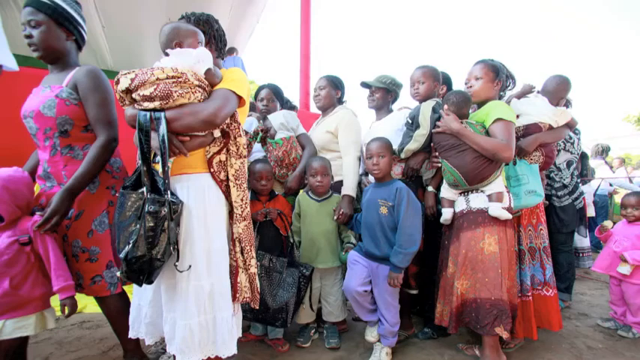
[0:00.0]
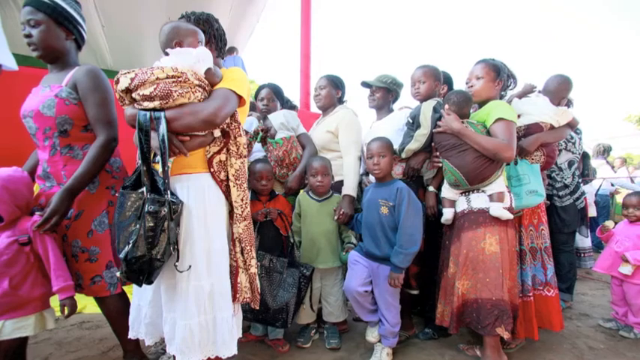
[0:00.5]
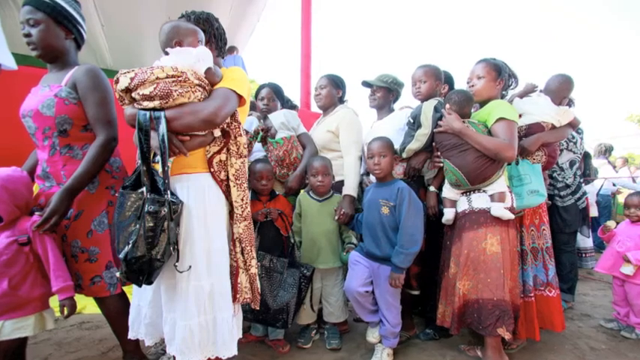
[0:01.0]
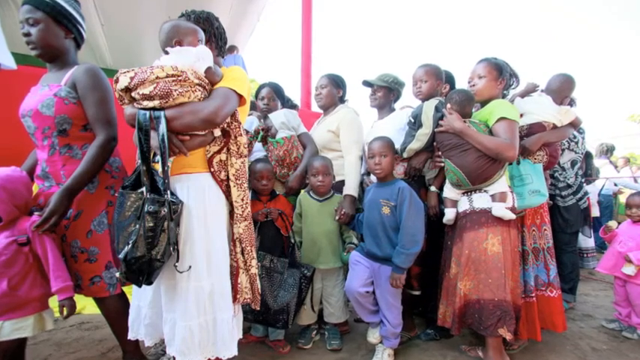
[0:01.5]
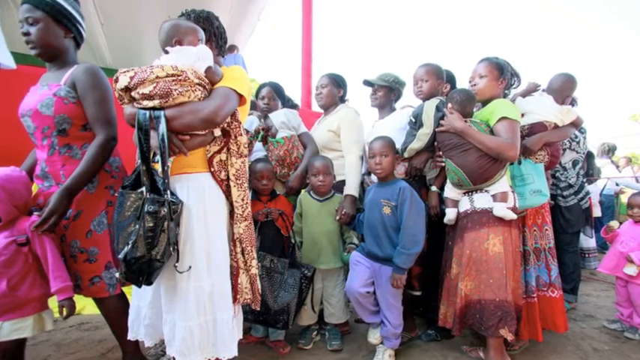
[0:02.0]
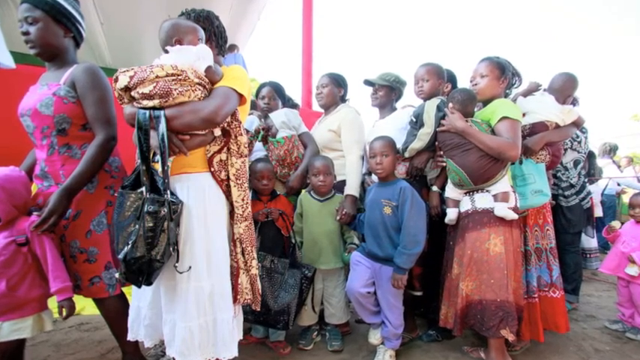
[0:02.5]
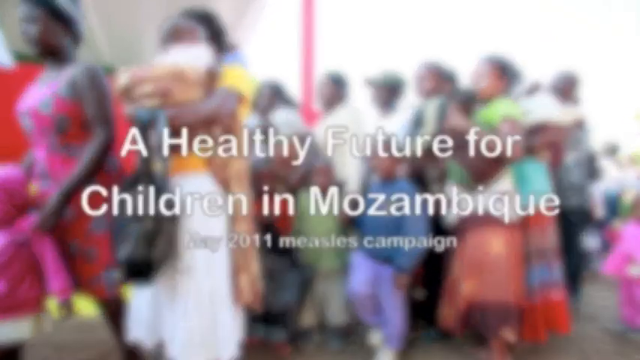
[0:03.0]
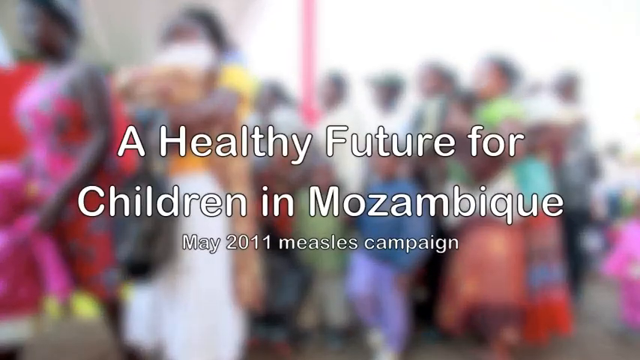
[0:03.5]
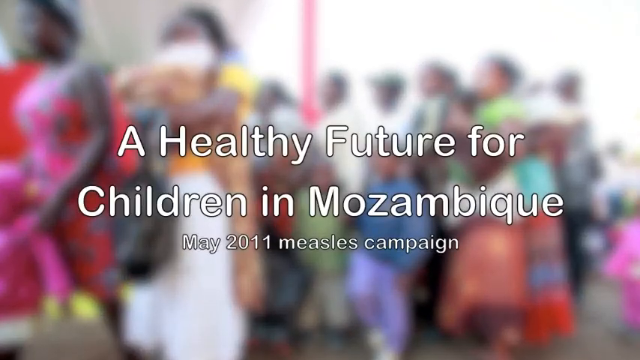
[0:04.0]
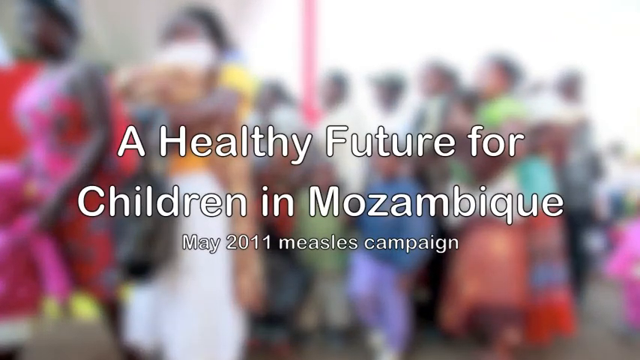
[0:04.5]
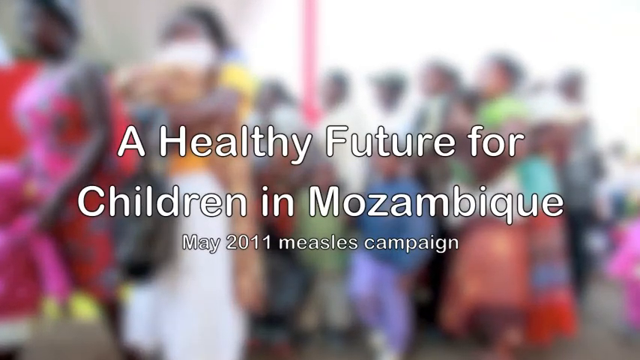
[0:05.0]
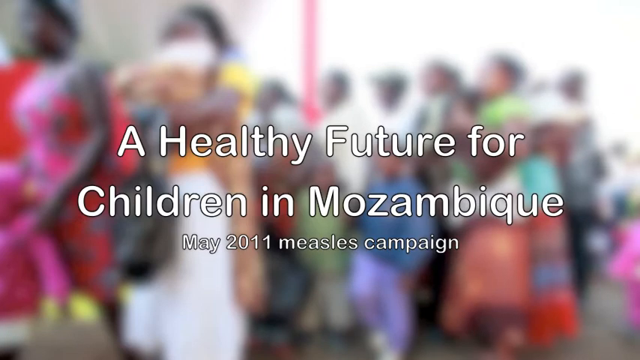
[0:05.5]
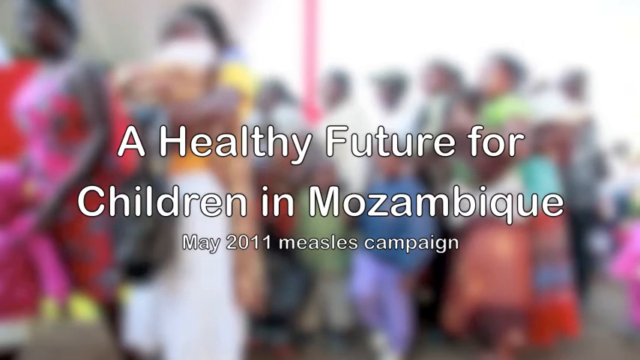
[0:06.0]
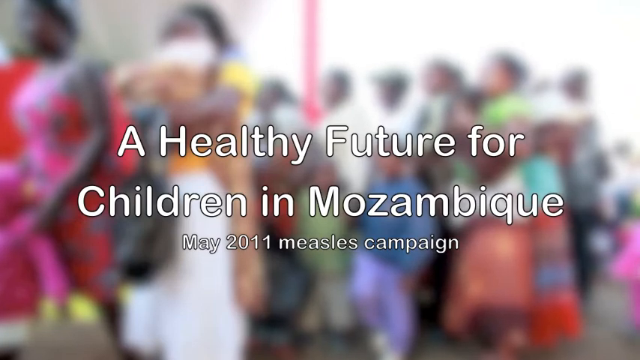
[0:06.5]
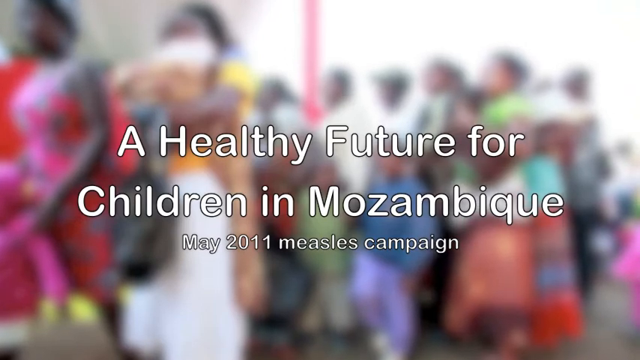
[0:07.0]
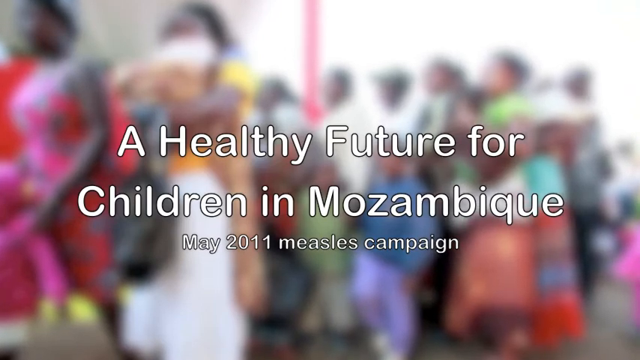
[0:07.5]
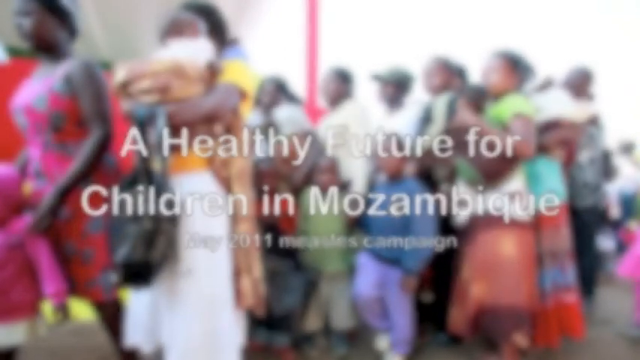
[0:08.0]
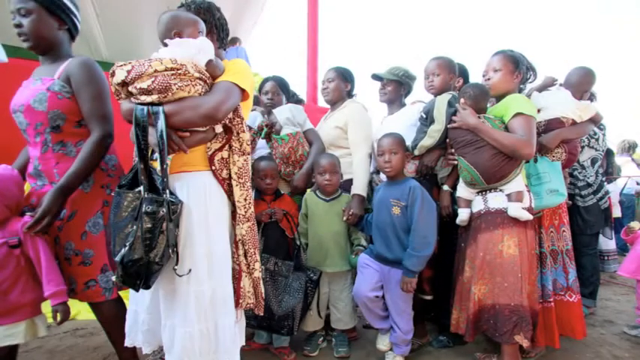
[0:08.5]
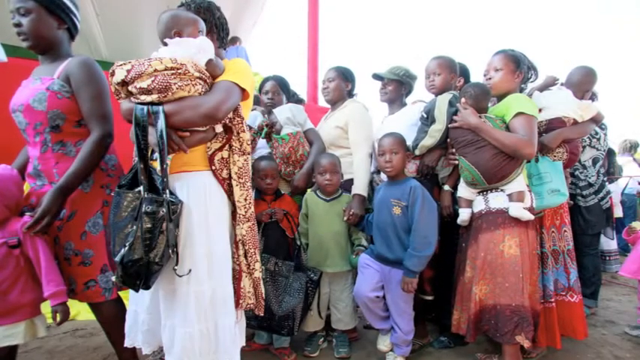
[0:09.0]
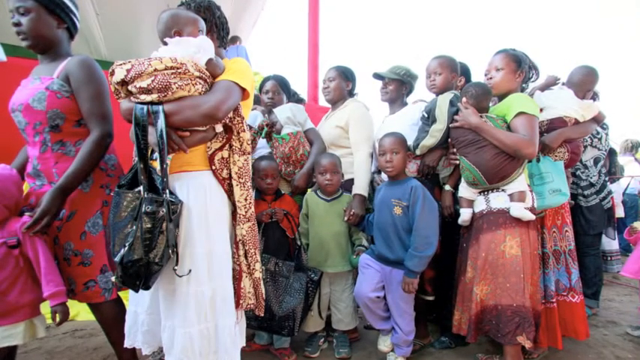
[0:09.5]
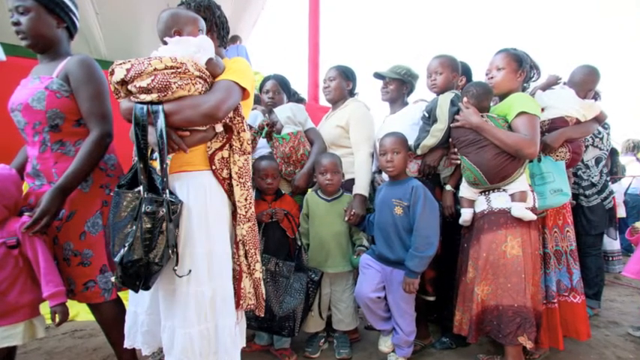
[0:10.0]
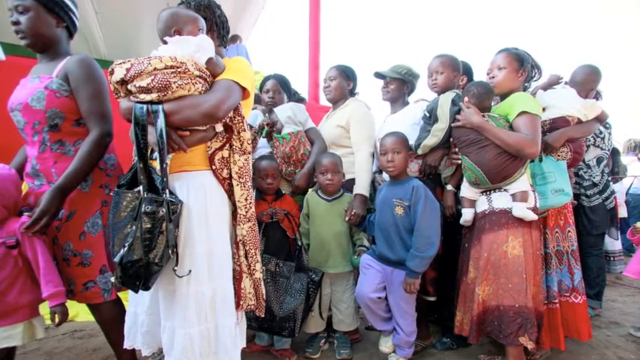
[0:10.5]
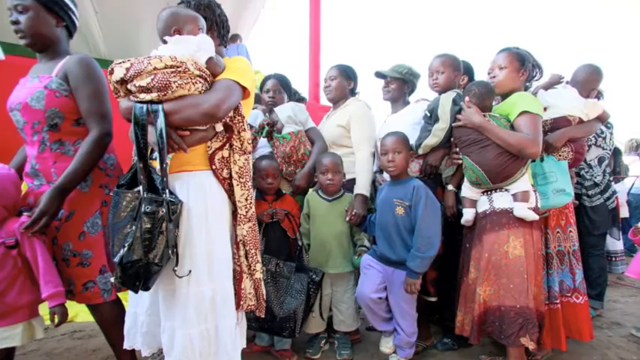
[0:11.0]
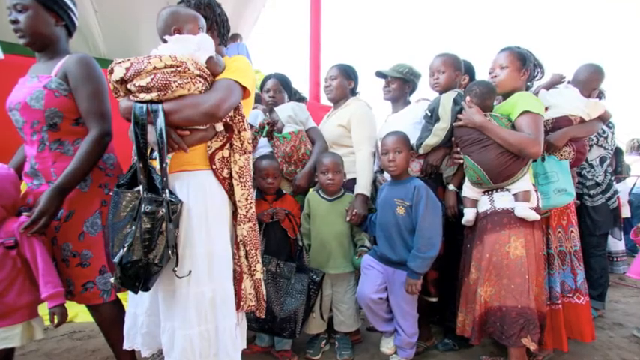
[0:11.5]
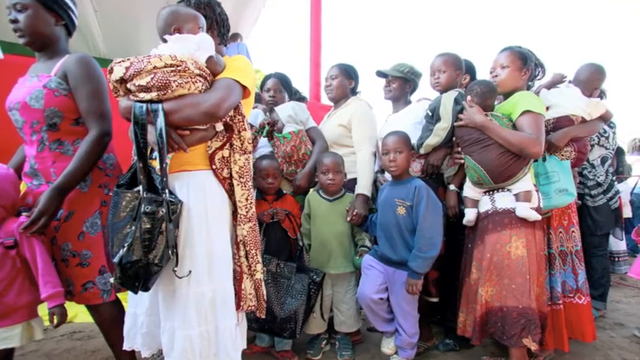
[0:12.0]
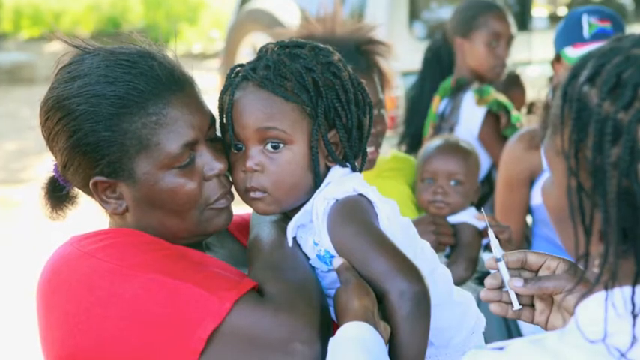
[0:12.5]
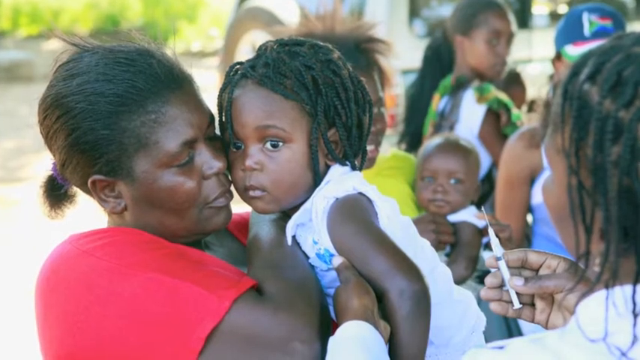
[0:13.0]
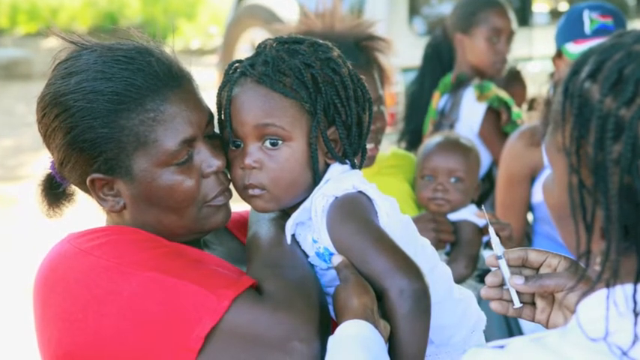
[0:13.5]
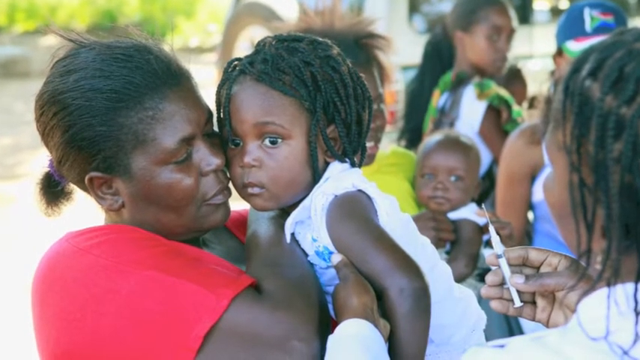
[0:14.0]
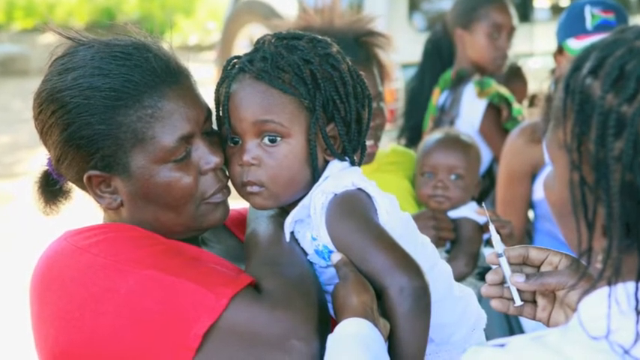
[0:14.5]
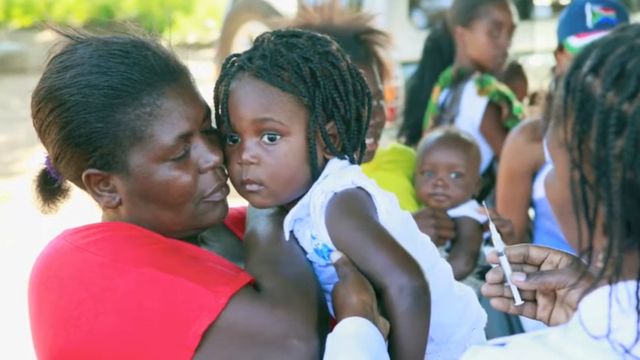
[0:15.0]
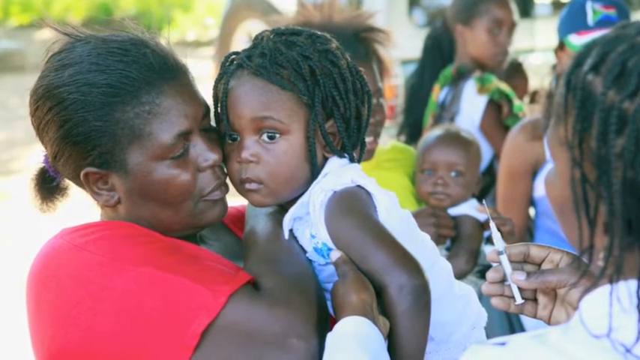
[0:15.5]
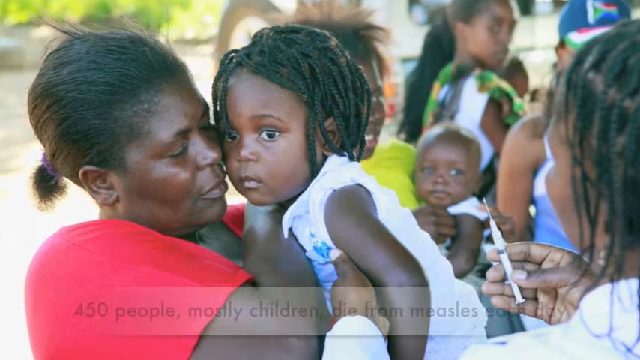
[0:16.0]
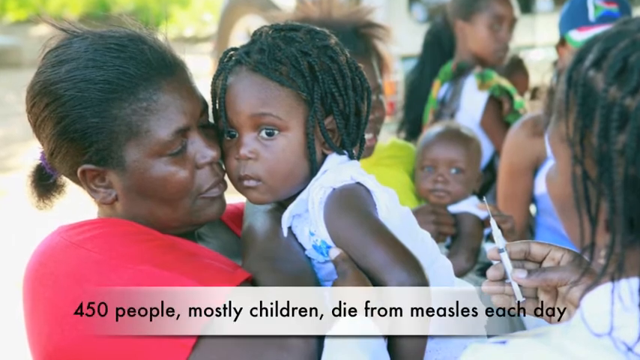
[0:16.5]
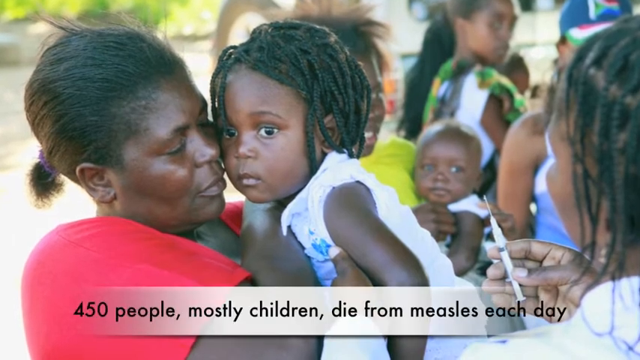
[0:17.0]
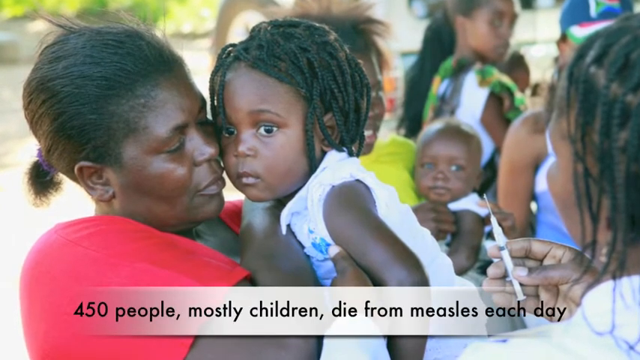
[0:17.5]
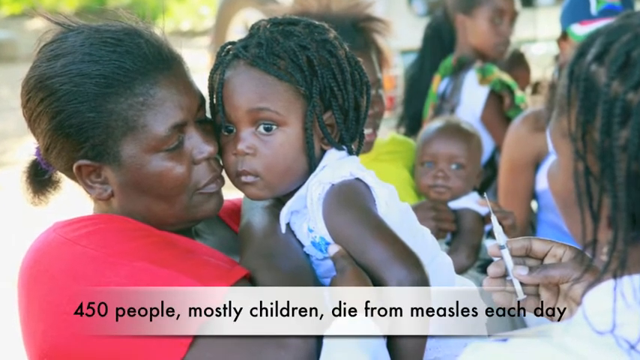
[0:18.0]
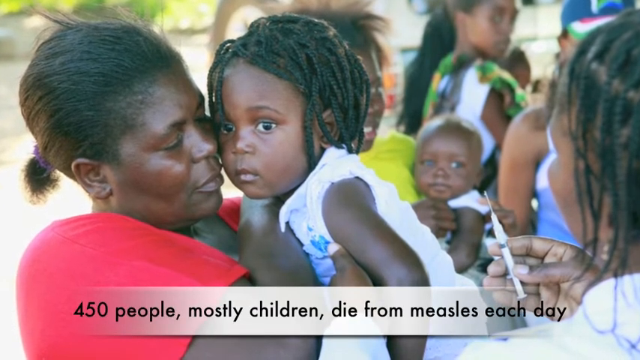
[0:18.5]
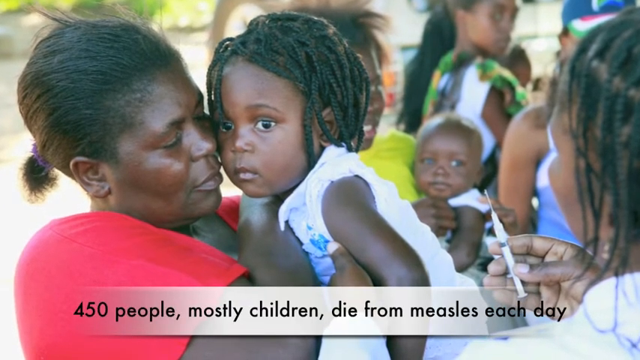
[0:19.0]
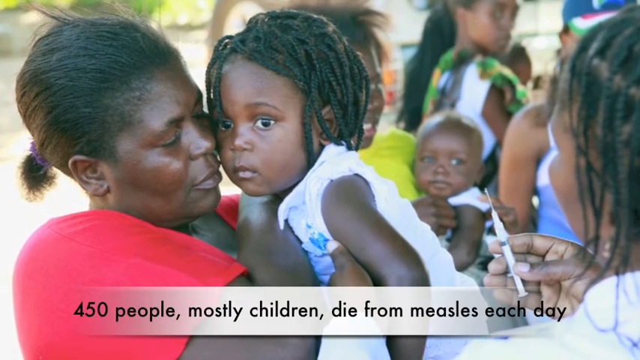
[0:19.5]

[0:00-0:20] The video begins with a still image of a crowd of people standing in line. On the left-hand side, facing toward the right, is a woman in a pink dress with spaghetti straps; she is holding on to a child in a pink jacket standing in front of her. Behind her is another woman in a white skirt and a yellow shirt, holding a baby in her arms. Behind her is a large group of people: three children stand in front of five adults, and the adult closest to the screen is holding a baby. Further back are more children with their guardians. After a few seconds, text pops up across the middle of the screen and the image behind it becomes blurry. The text reads "A healthy future for children in Mozambique," and underneath, in smaller font, "May 2011 Measles Campaign." After a few seconds the text fades off the screen and the background becomes clear again. A second image then appears, showing just the face of someone on the right-hand side holding an immunization needle. Standing in front of her on the left-hand side of the screen is a woman in a red shirt holding a little girl, who leans in so that the two have their faces close together. The girl looks unhappy about receiving the vaccine.